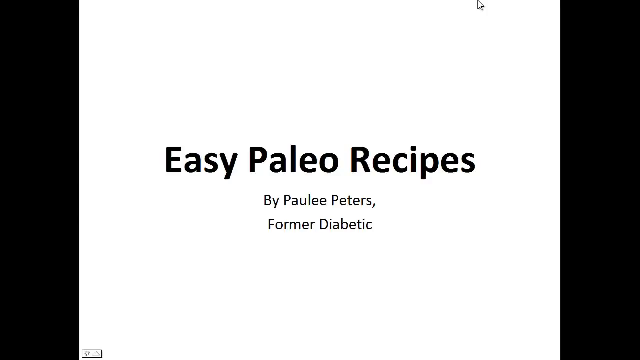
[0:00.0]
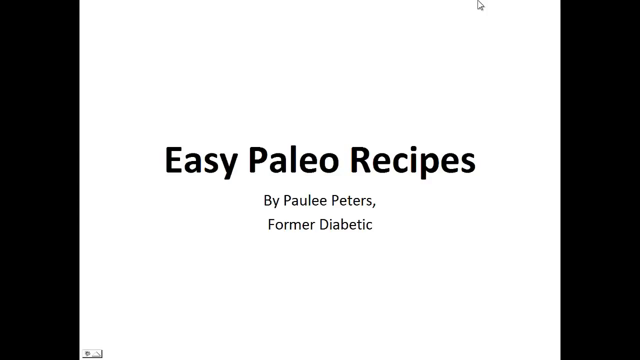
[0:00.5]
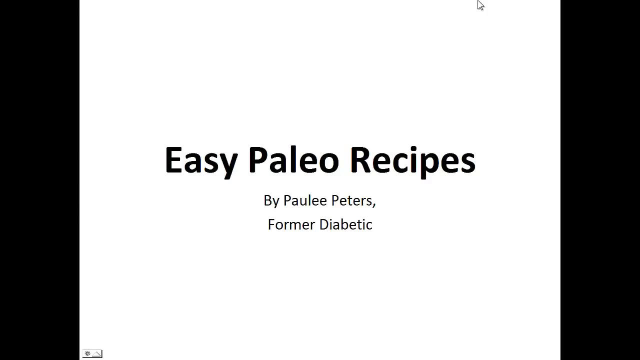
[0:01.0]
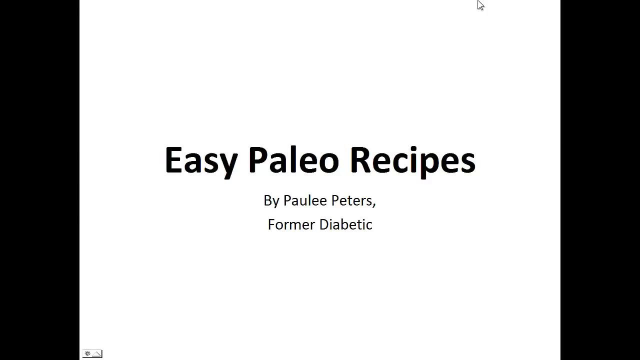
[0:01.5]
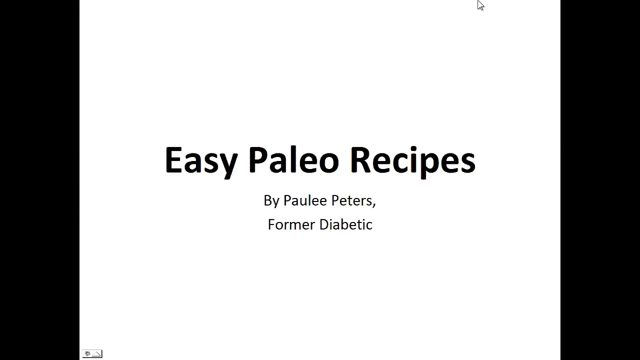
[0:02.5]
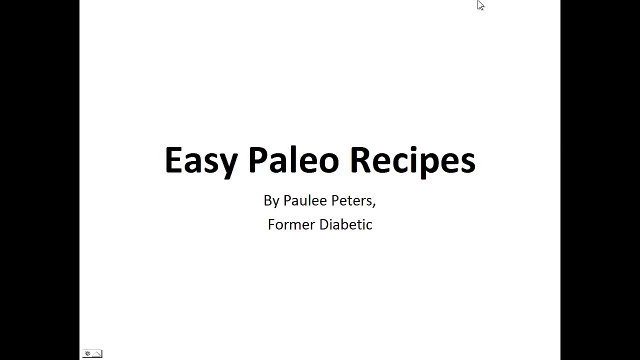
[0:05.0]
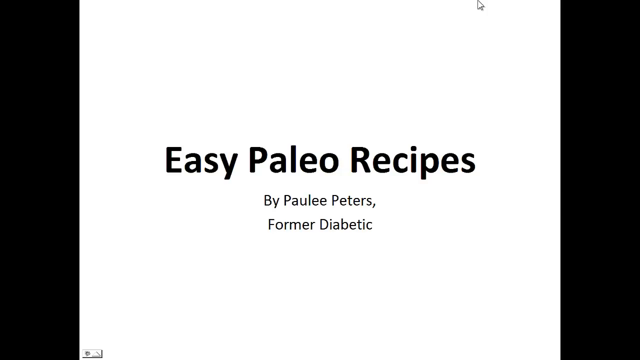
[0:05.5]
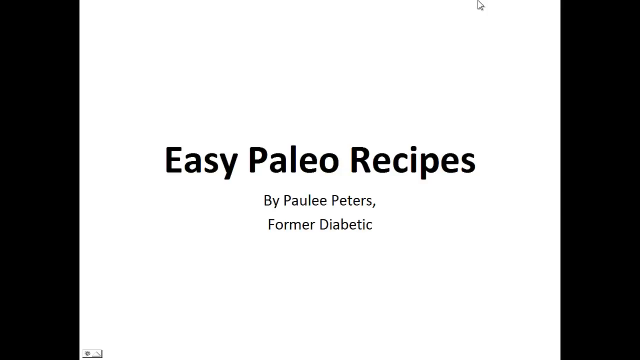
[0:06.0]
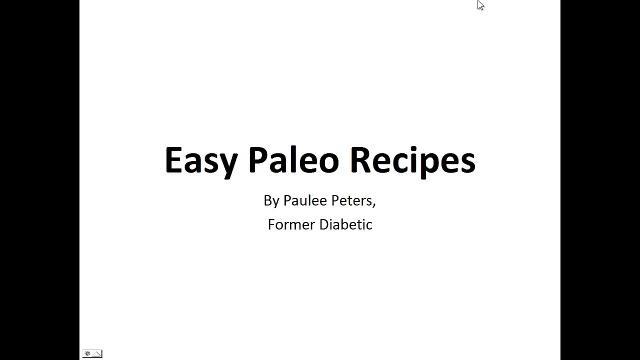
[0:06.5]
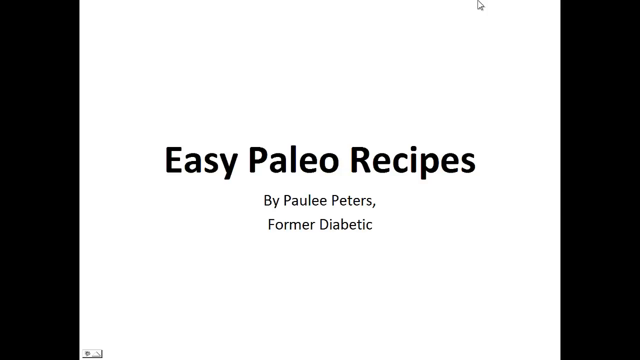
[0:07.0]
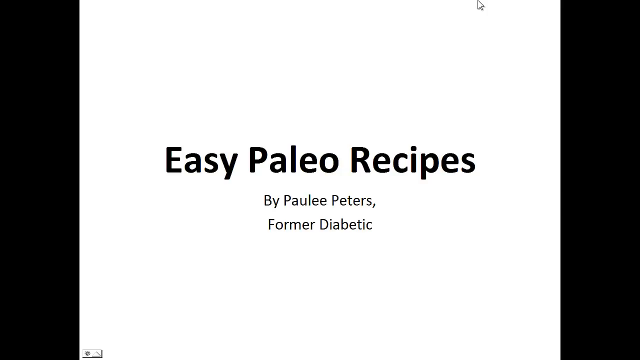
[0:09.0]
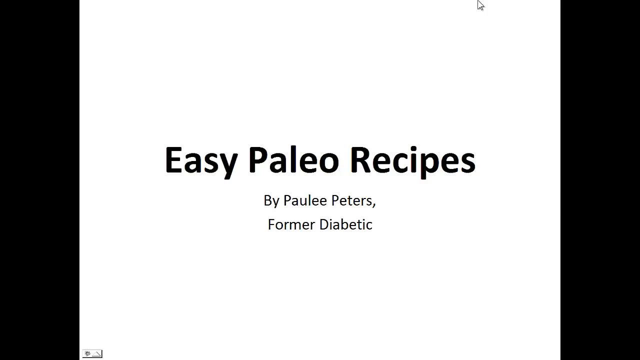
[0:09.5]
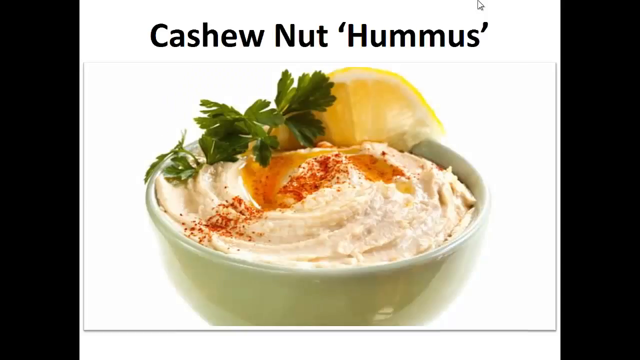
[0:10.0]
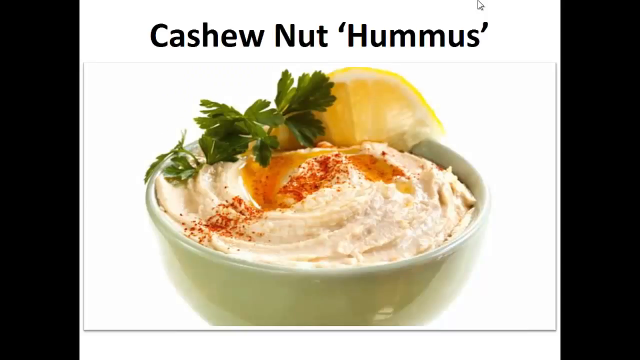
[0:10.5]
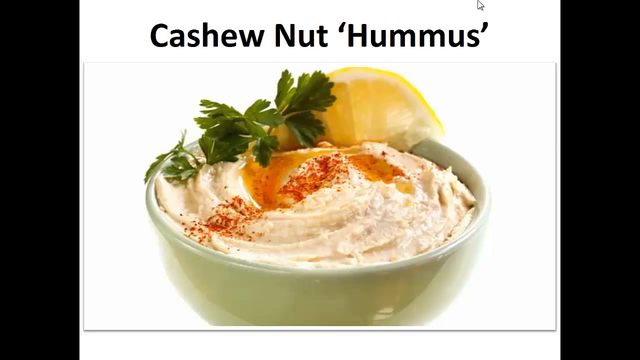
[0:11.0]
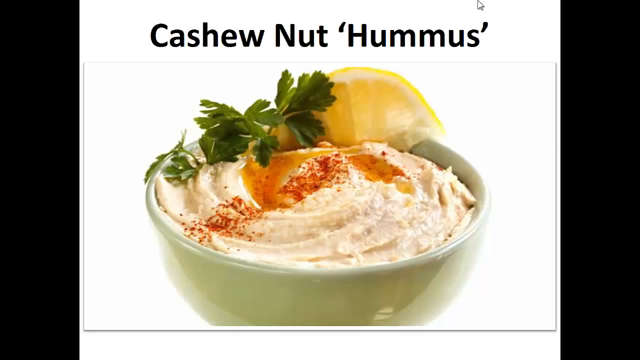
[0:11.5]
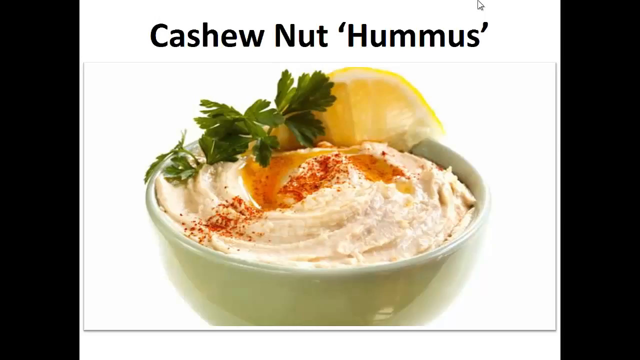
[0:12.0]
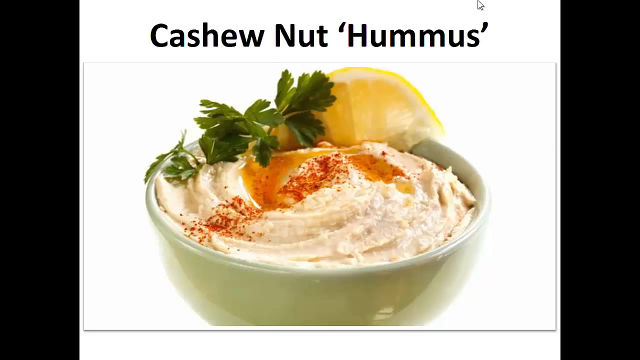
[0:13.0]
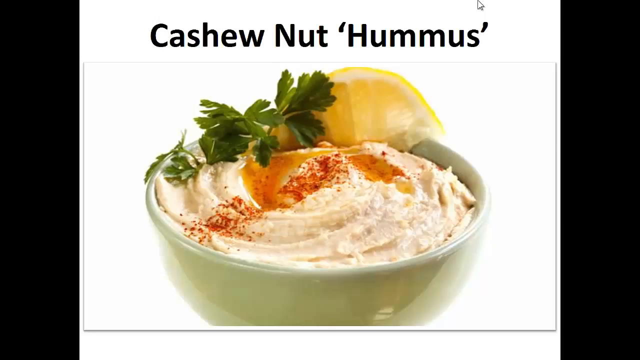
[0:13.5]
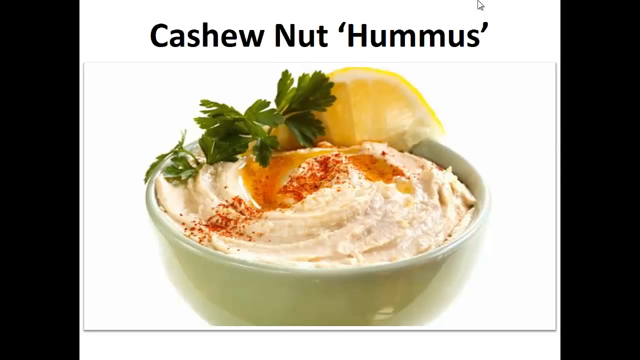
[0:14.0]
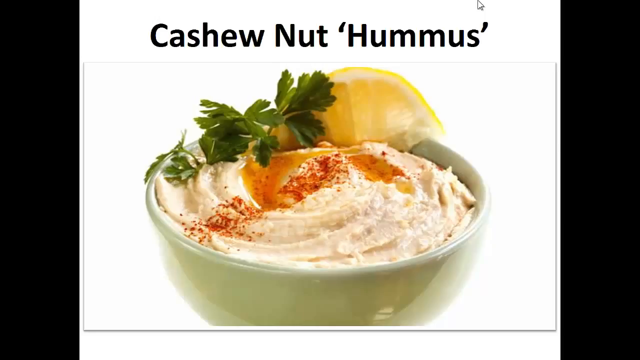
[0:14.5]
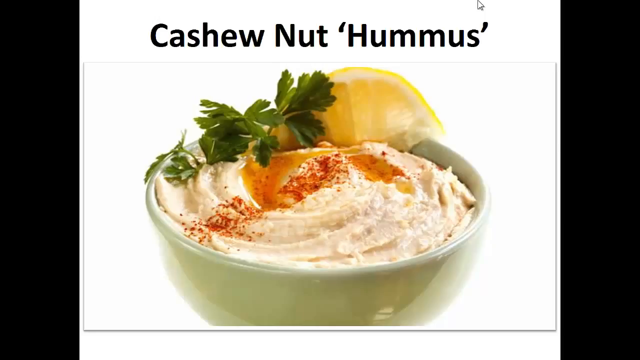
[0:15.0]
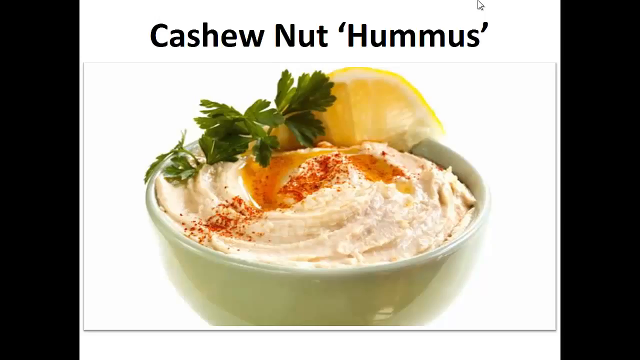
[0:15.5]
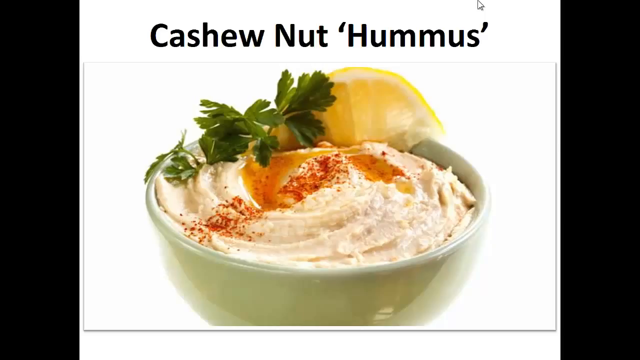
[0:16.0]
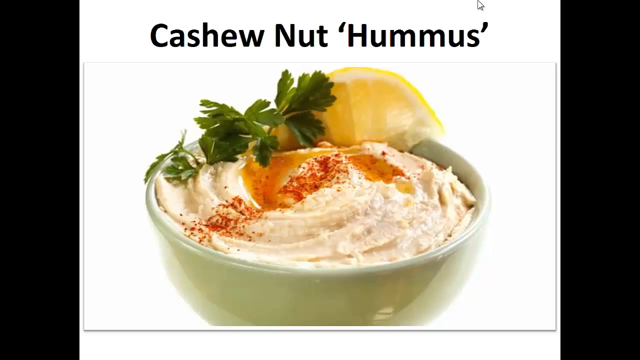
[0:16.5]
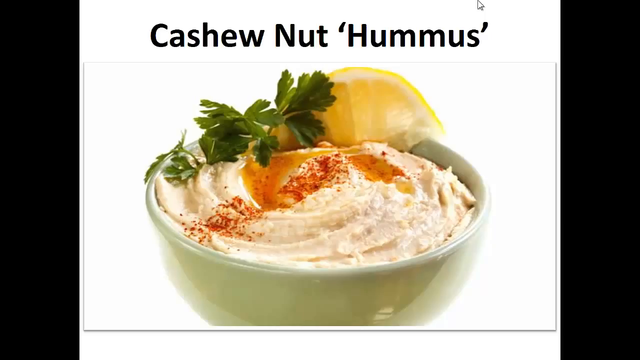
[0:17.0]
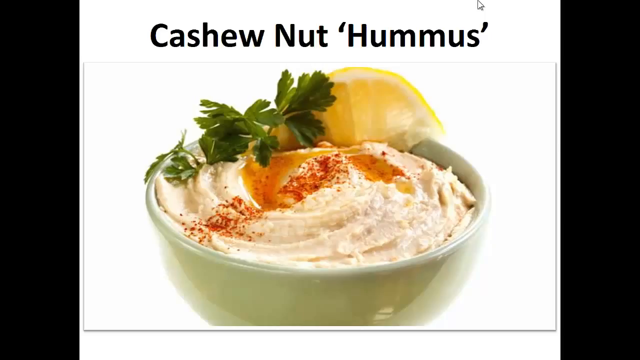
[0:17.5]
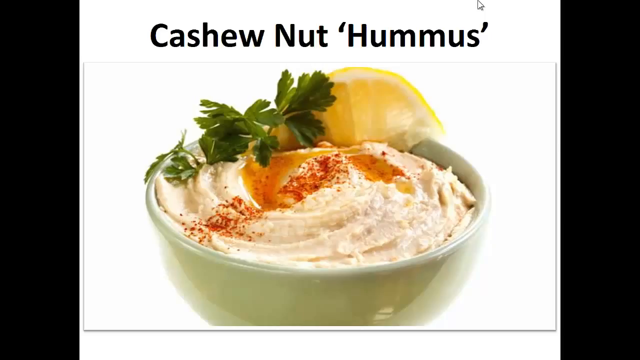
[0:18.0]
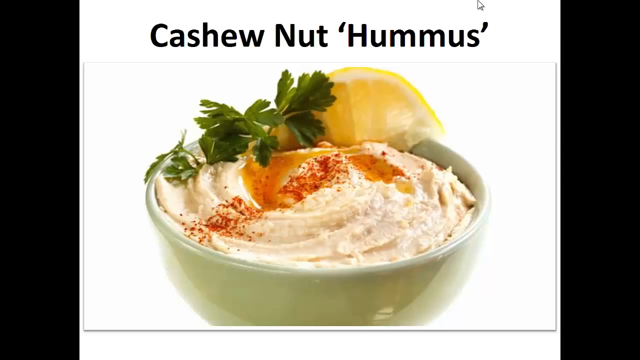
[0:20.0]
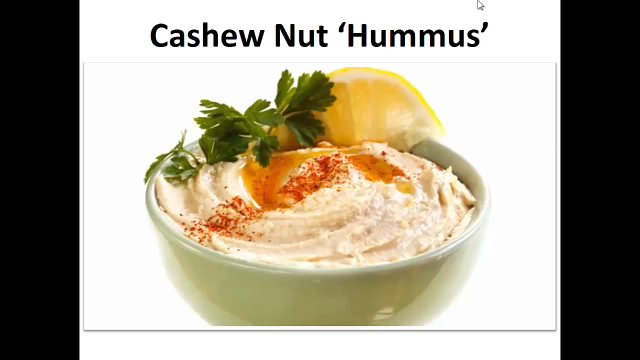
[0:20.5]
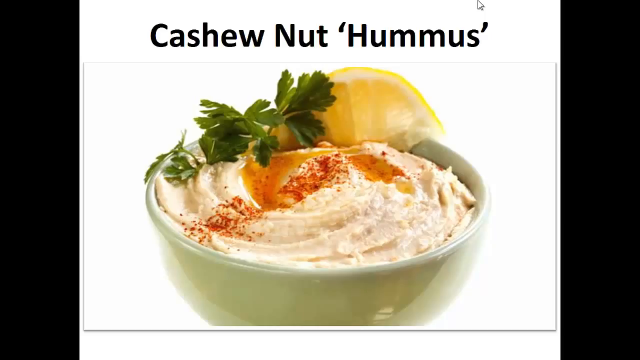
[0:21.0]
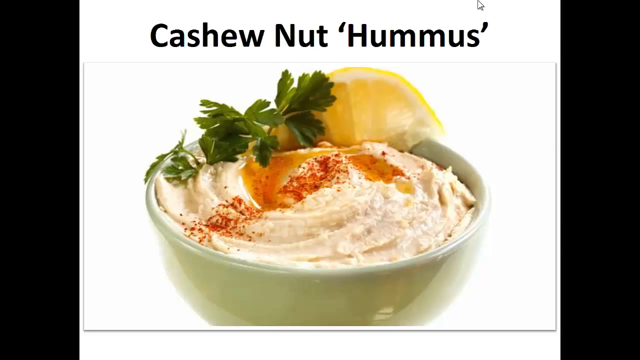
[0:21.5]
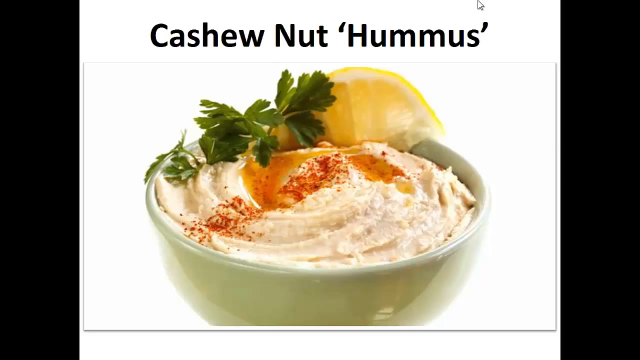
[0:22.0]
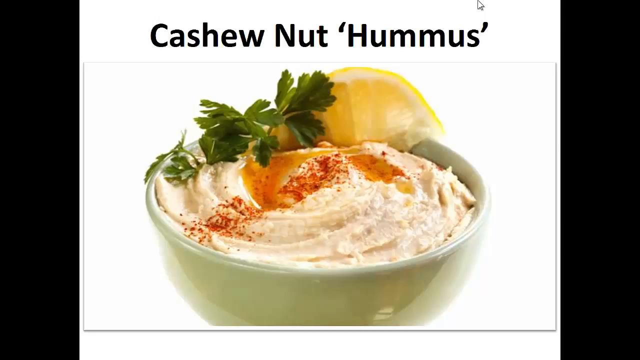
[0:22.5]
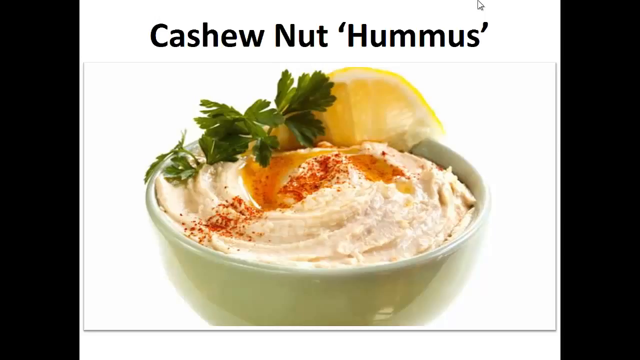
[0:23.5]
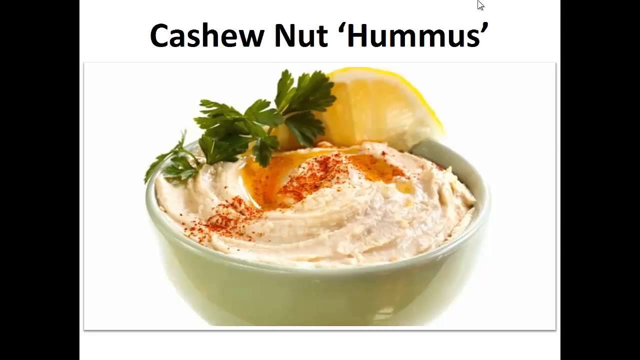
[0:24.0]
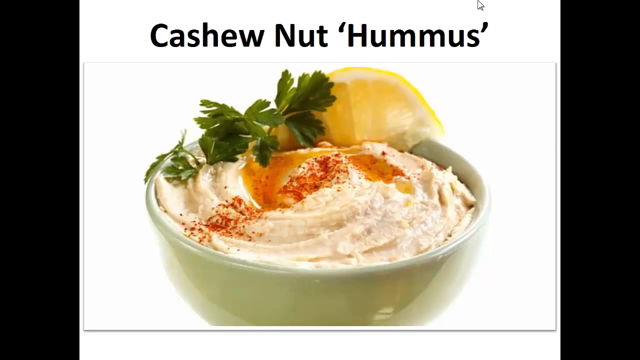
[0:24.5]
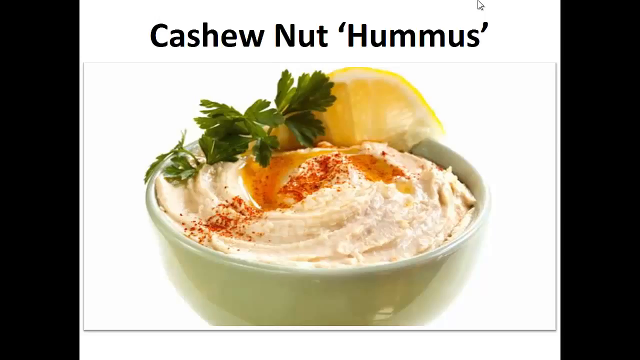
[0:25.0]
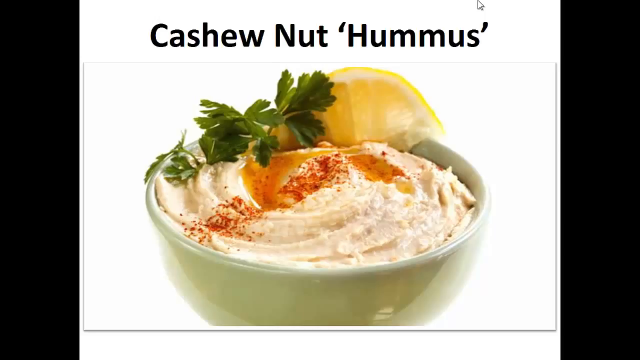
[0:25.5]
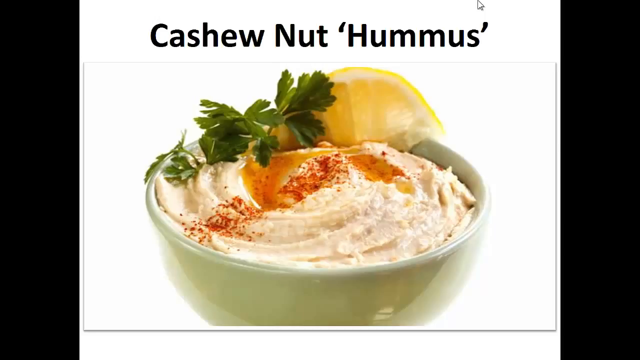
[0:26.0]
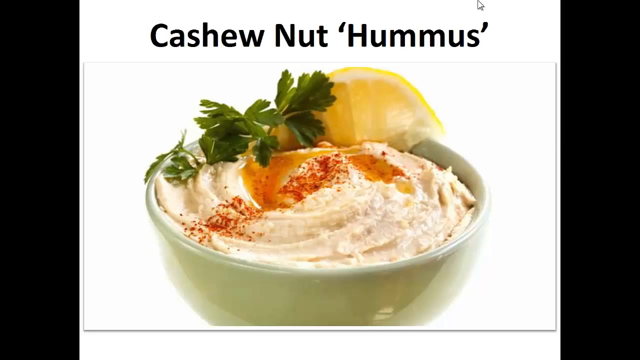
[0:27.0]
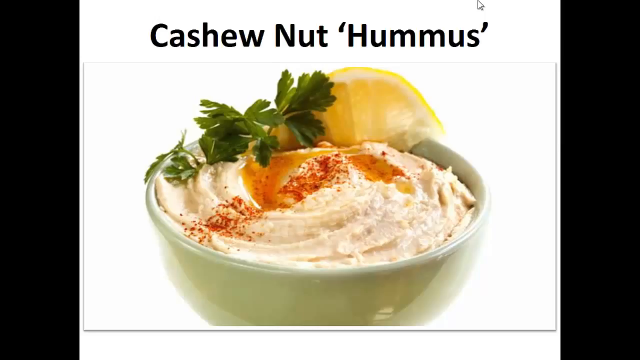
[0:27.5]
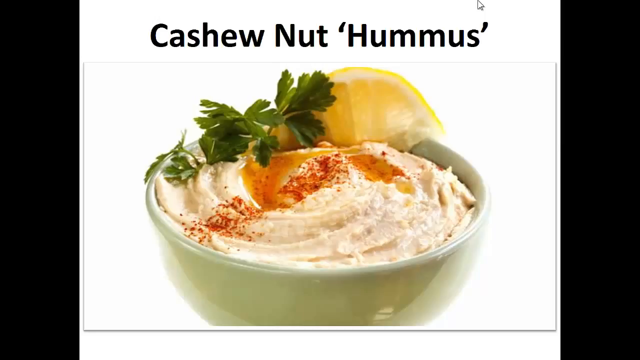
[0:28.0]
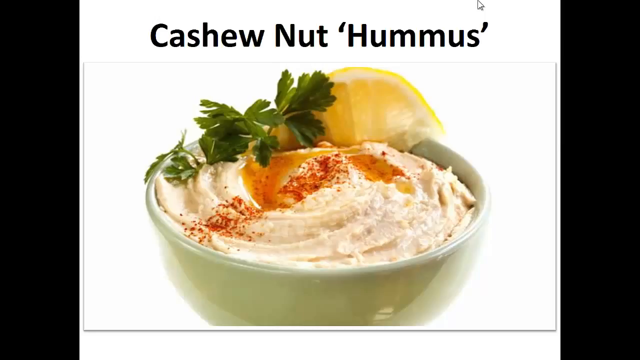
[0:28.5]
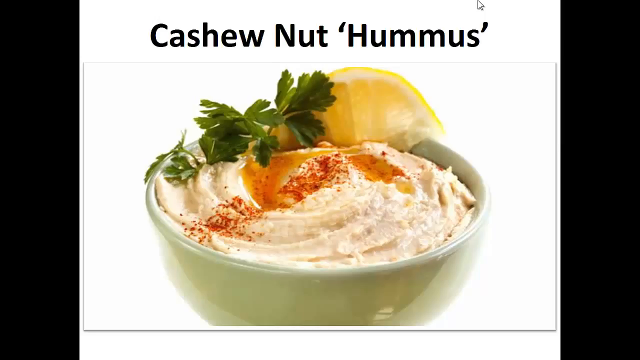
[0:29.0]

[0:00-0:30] An intro screen with a title background appears, titled "Easy Paleo Recipes by Pauline Peters, a former diabetic." It stays on screen for about 10 seconds, then transitions to a screen with the title "Cashew Nut Hummus" at the top. Below it is a dish of cashew nut hummus, with what looks like the hummus in a bowl. There is a lemon, along with leaves and some type of seasoning and flavoring on top. The hummus is in a plastic bowl on a white background, and this image stays for about 20 seconds. The lemon is a yellow half lemon resting on the edge of the bowl, with a few leaves next to it.